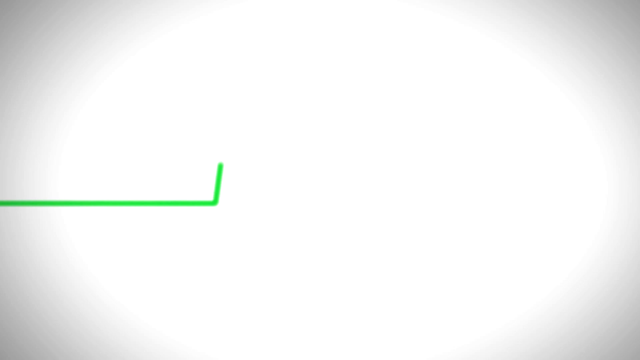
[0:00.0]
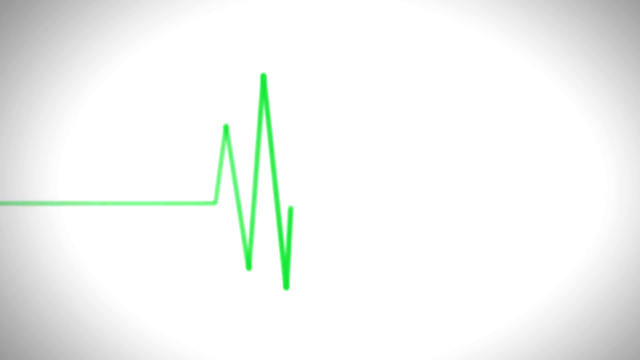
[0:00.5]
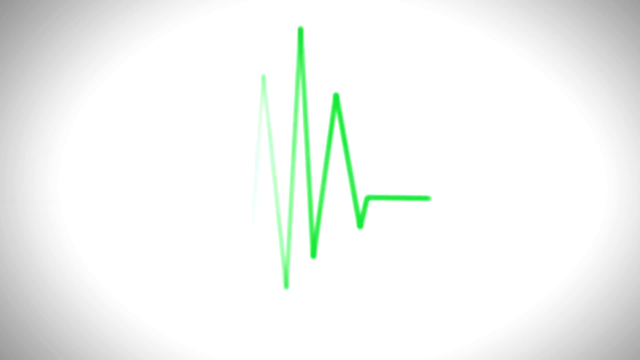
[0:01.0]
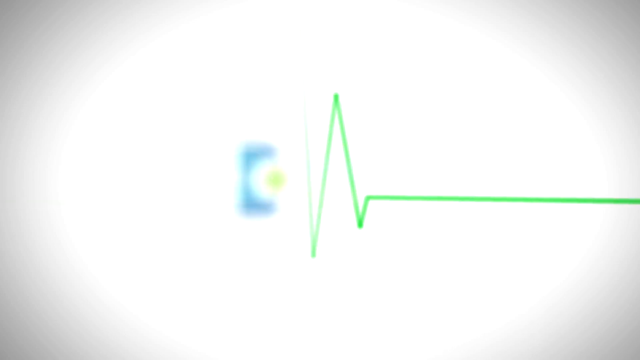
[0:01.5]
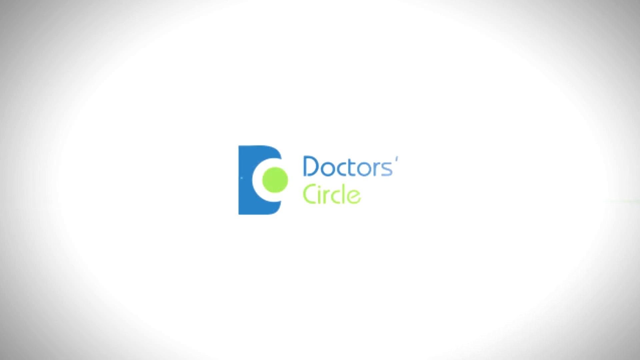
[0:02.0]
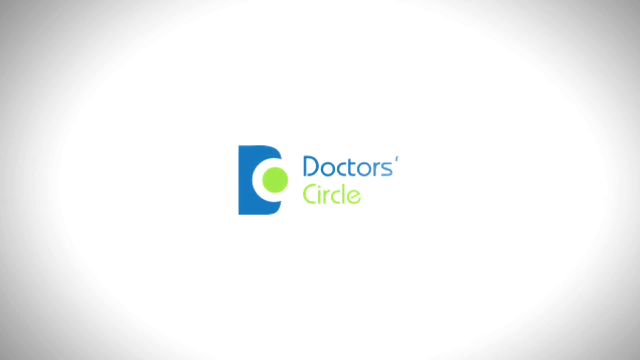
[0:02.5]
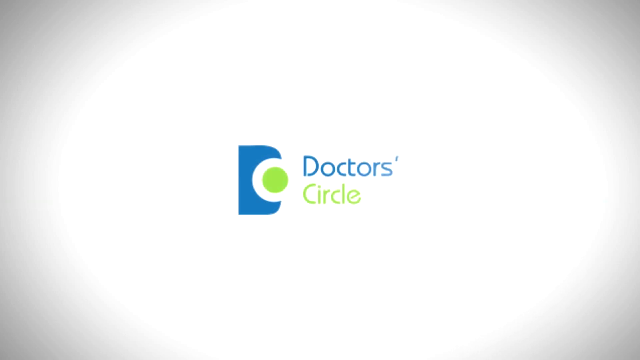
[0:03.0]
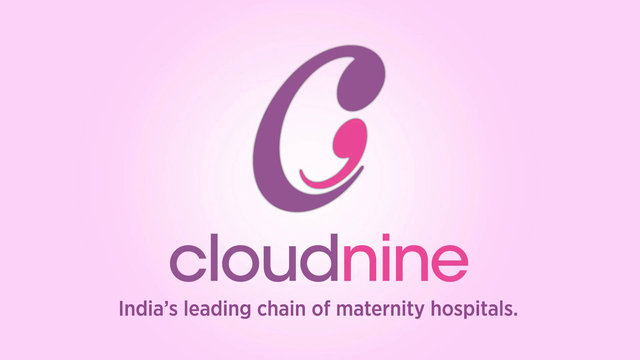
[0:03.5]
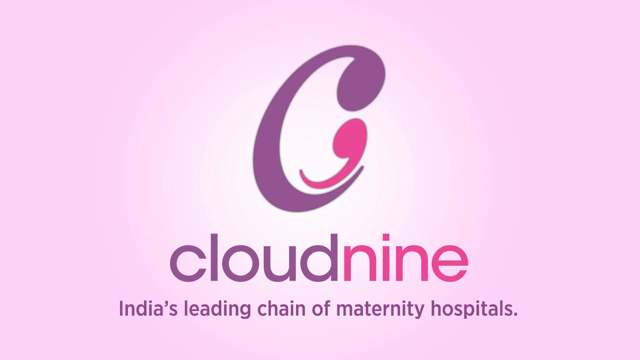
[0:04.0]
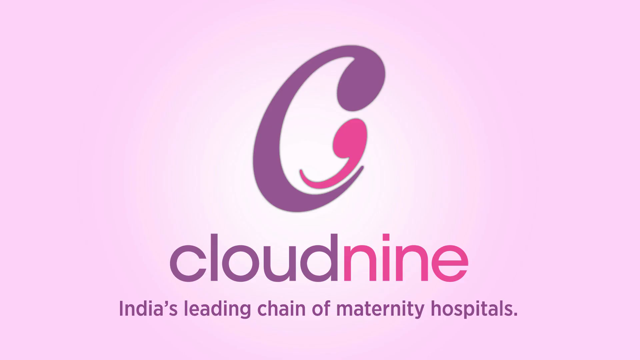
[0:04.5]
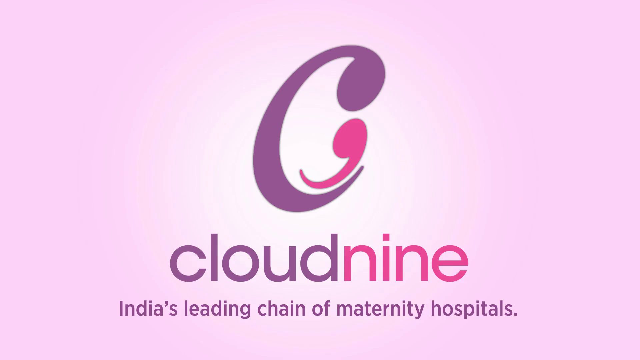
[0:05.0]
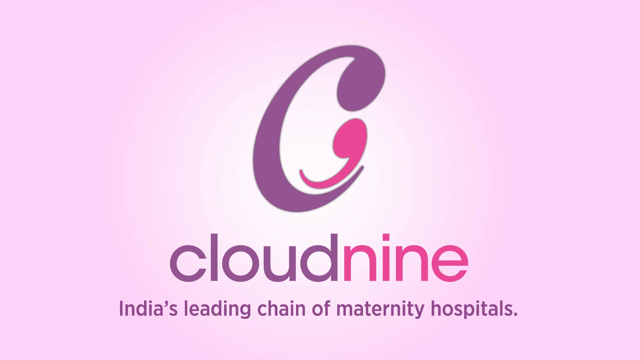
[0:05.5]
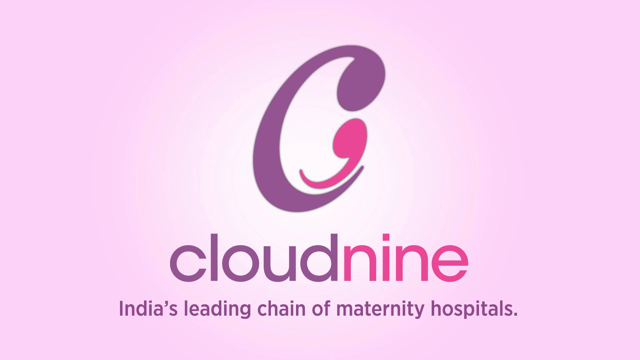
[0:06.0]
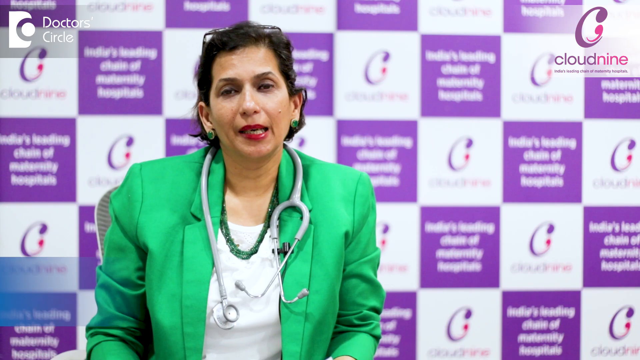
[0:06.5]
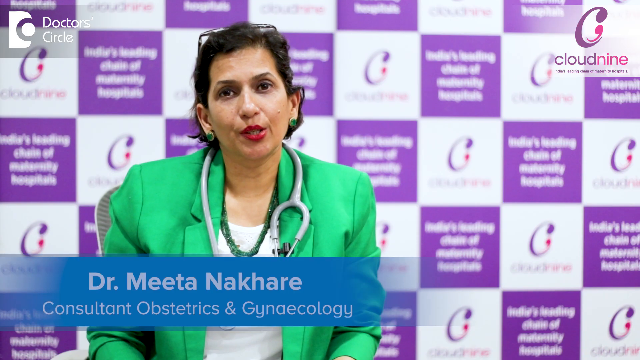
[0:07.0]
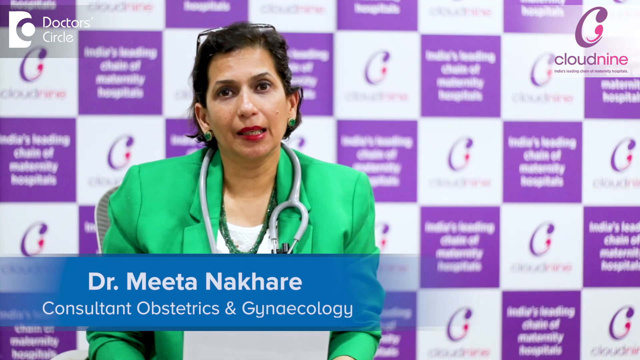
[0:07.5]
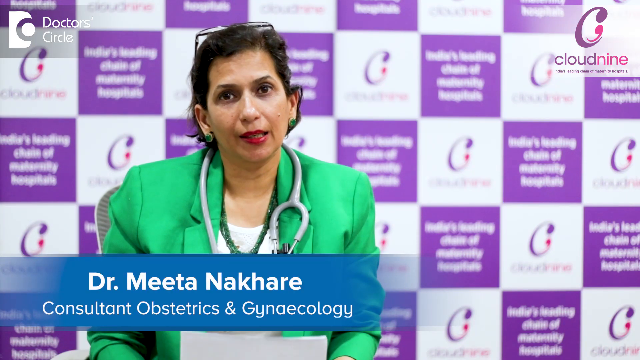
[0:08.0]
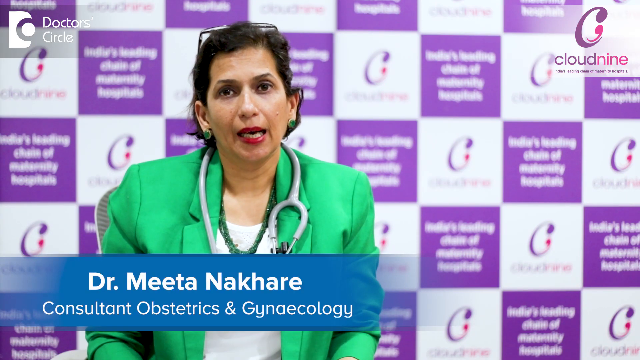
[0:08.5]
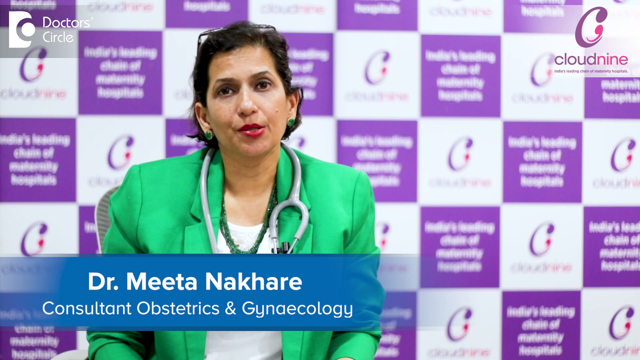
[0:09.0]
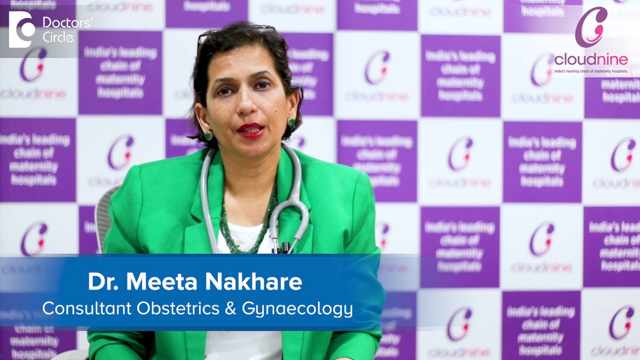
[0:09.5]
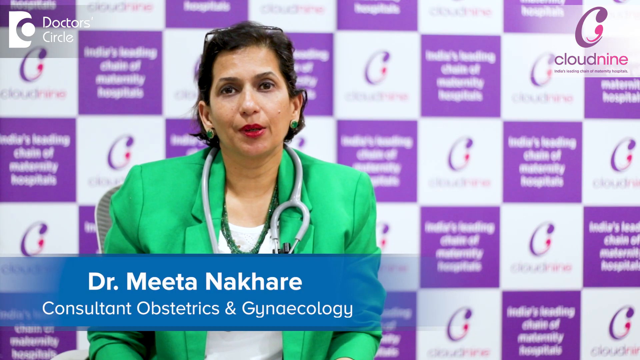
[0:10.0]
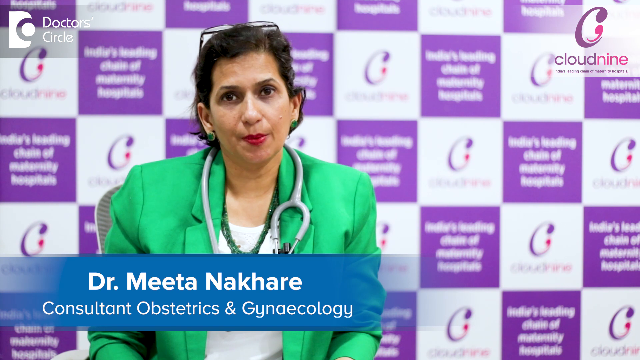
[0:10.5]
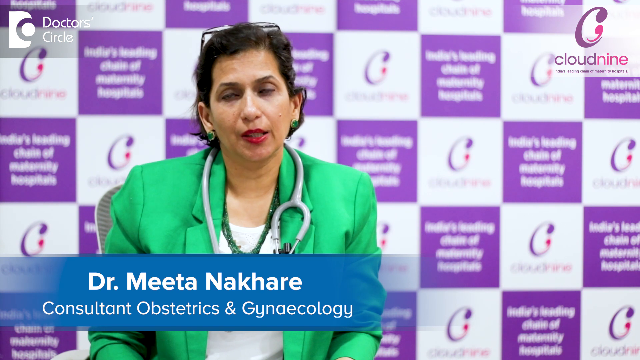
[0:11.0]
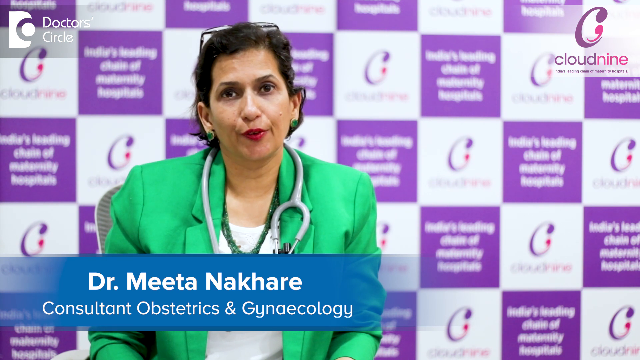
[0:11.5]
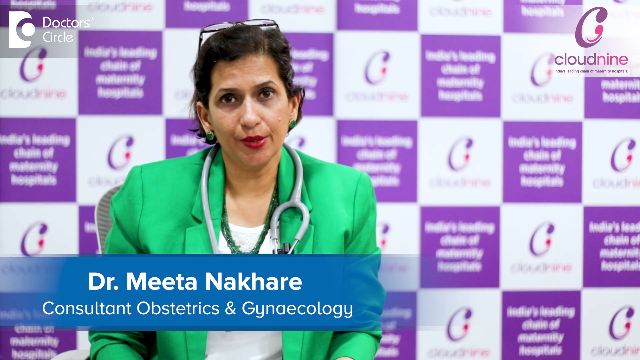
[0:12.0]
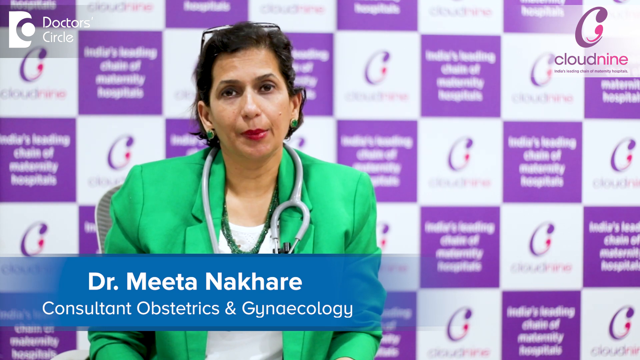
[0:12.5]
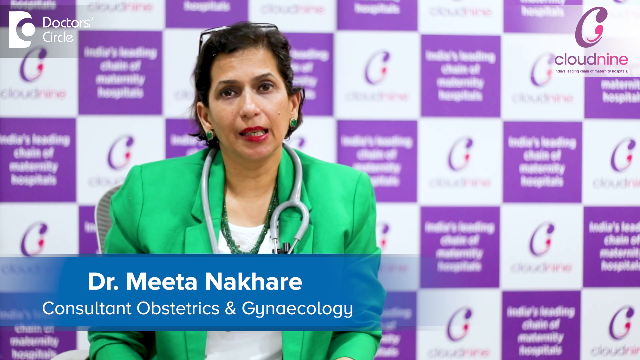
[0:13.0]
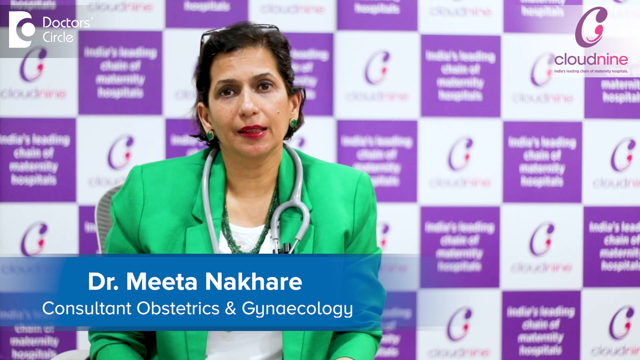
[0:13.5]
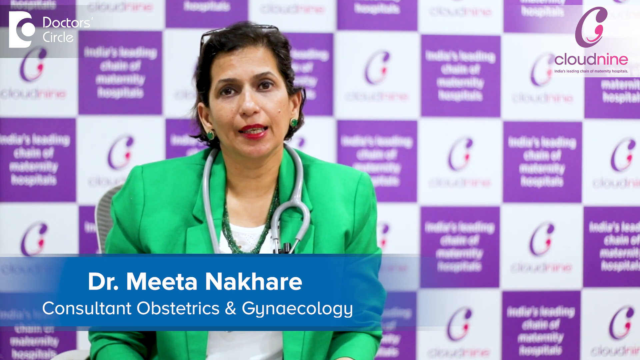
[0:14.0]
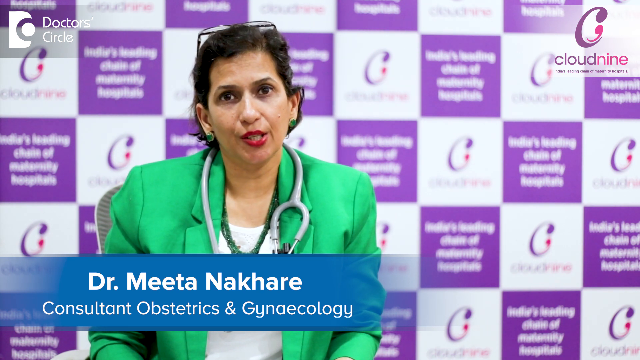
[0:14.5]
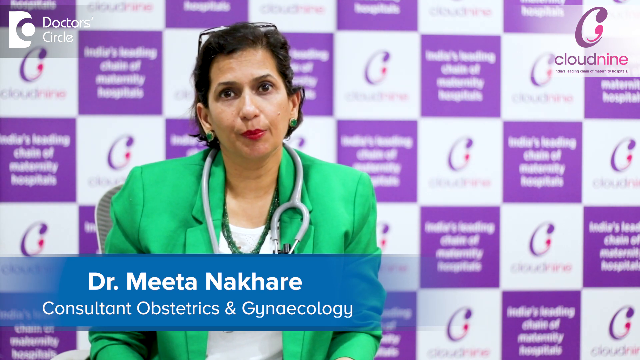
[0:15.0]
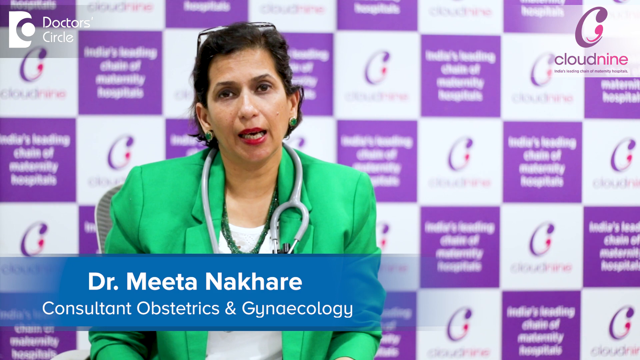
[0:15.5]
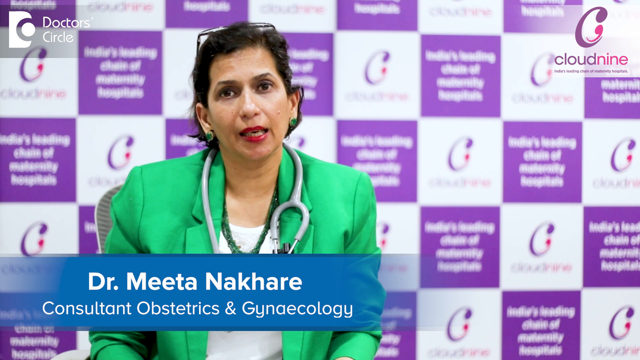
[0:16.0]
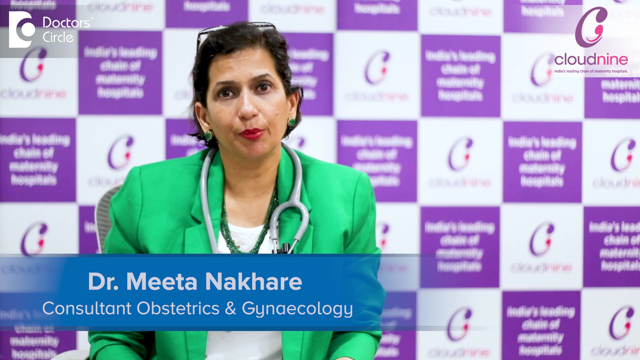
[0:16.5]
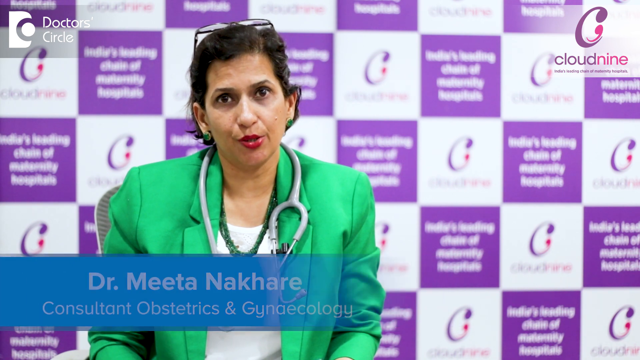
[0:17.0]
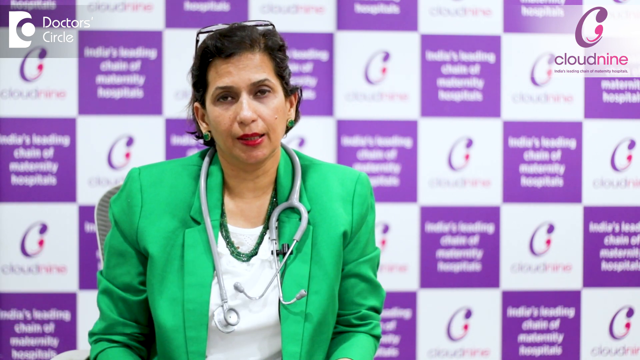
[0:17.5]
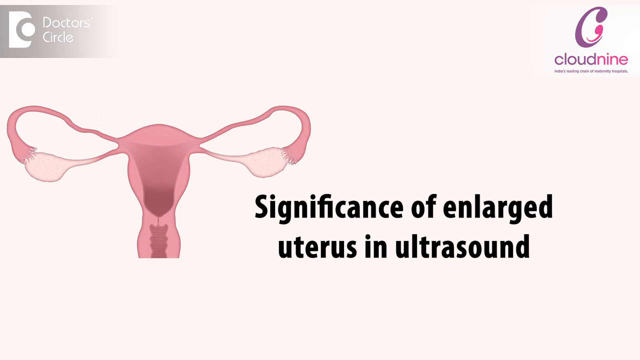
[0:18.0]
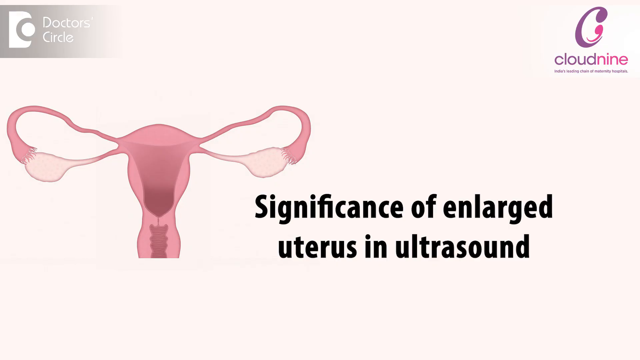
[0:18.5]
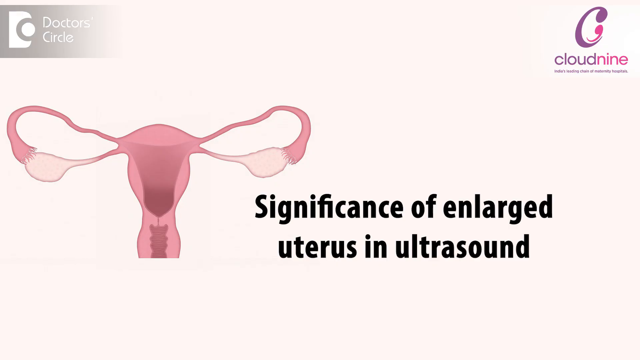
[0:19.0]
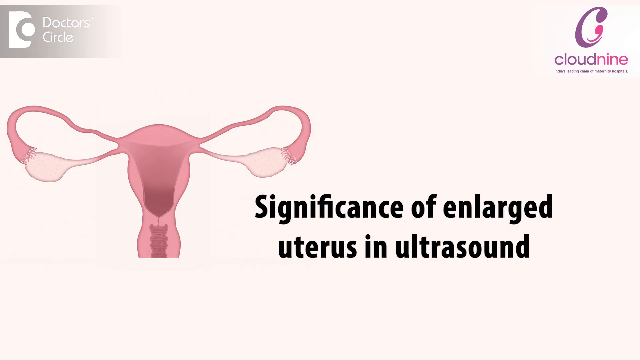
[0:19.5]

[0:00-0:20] Green pulse lines appear on the screen. They move in straight lines in a diagonal direction, going up and down, with the middle one reaching the highest and lowest points. Eventually the line becomes straight and moves horizontally across the screen. Text appears reading "Doctor's circle", with "Doctor's" in blue and "circle" in green. Next to it is a symbol that looks sort of like a D: a green circle surrounded by a white circle, with a blue D shape around it. The video cuts to more text and a symbol, reading "Cloud Nine, India's leading chain of maternity hospitals". The text is purple apart from the nine, which is pink, and "India's leading chain of maternity hospitals" is smaller than "Cloud Nine" and below it. In the center of the screen is a symbol that looks like a C and could be taken for two question marks; the purple part is the C and the pink part in the middle is the nine. Next, a lady talks, and on-screen text identifies her as "Dr Mita Nakhar", a consultant. She wears a green blazer with a yellow top beneath it, a necklace, red lipstick and green earrings, and has glasses on top of her head. A grey stethoscope is around her neck, its ear pieces over her left shoulder and the other part over her right shoulder. She looks like she is sitting down. Her head tilts slightly to the right as she talks, with slight movements to the left; otherwise she is very still, her shoulders rarely moving. Slight jump cuts are visible. The video then cuts to a pink image, apparently of a uterus though it looks a bit like a pelvis, on the left of the screen, with the bold black text "significance of enlarged uterus in ultrasound" on the right.